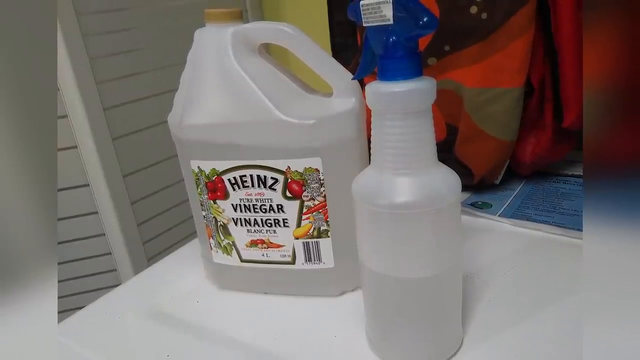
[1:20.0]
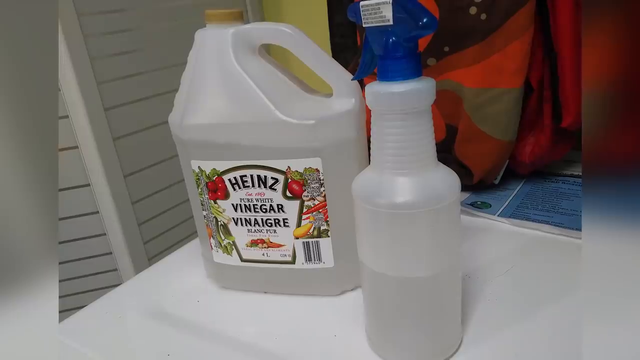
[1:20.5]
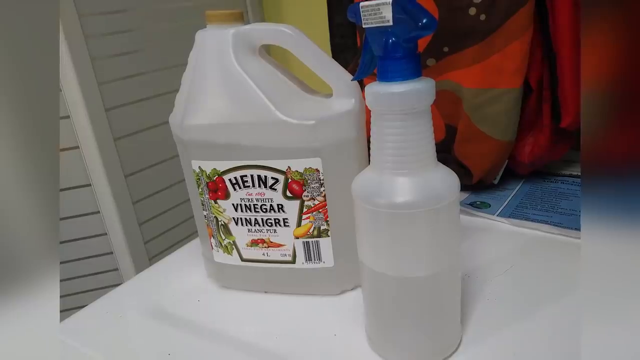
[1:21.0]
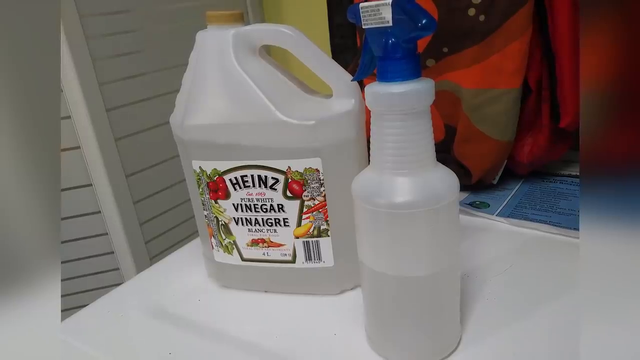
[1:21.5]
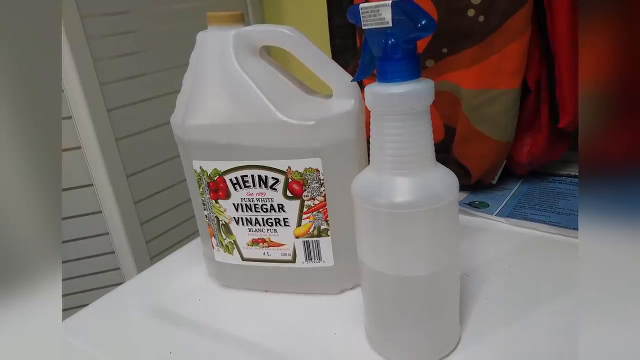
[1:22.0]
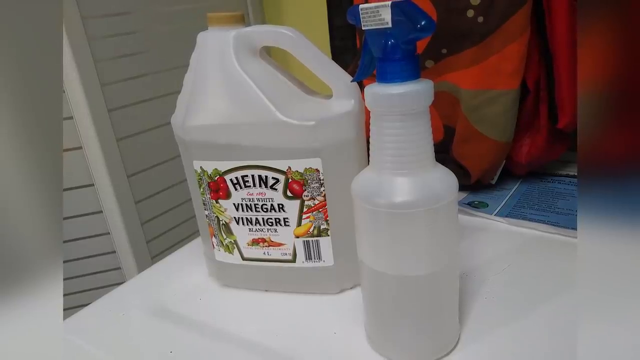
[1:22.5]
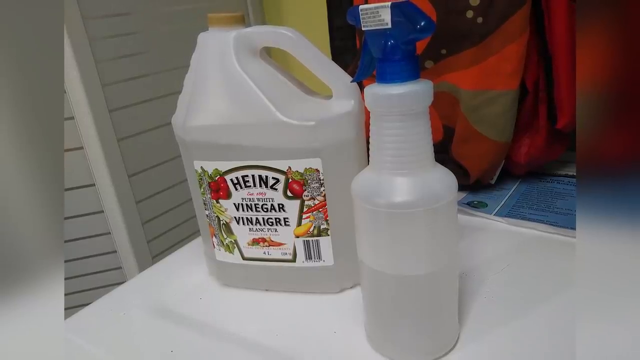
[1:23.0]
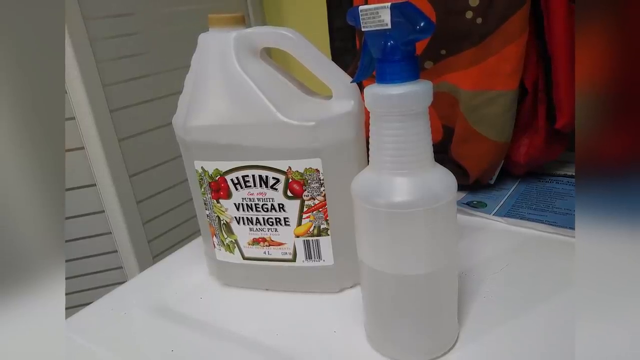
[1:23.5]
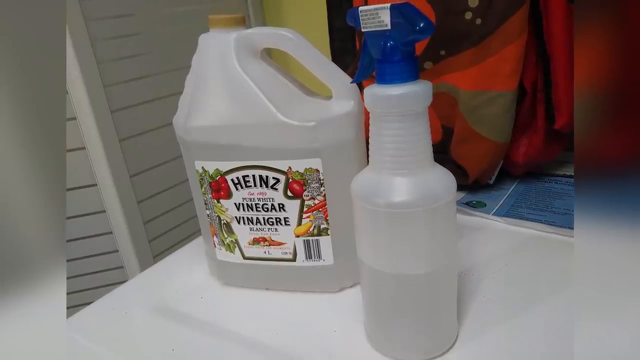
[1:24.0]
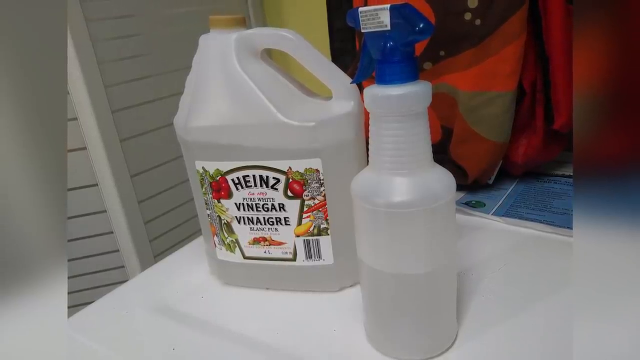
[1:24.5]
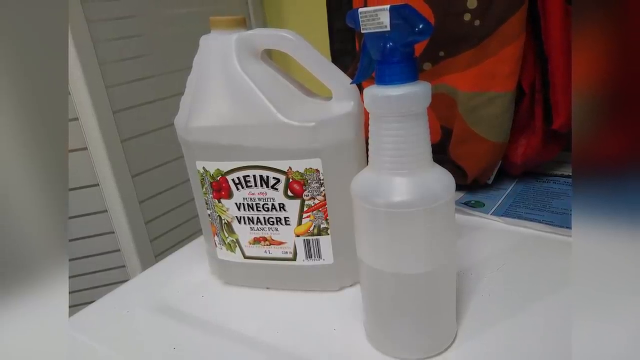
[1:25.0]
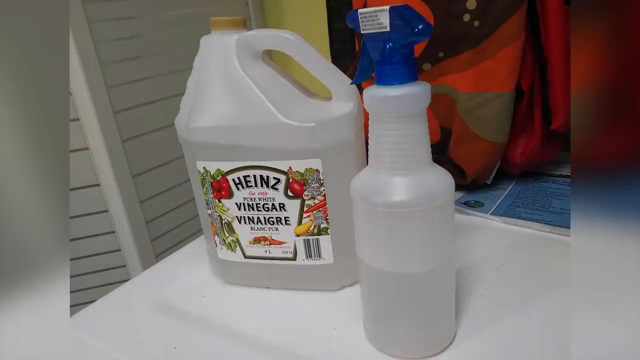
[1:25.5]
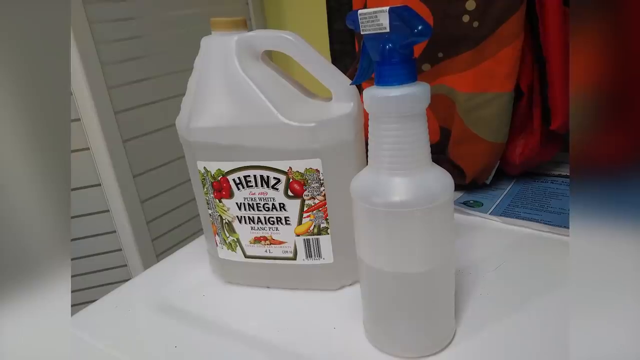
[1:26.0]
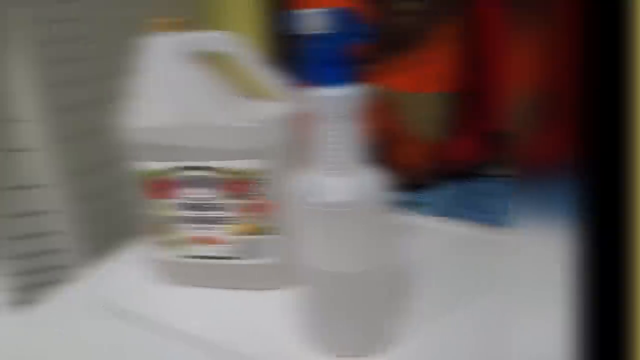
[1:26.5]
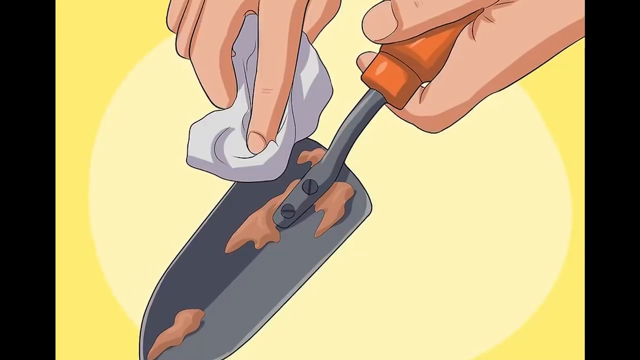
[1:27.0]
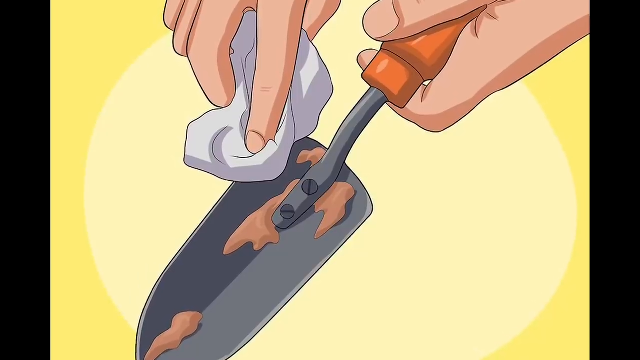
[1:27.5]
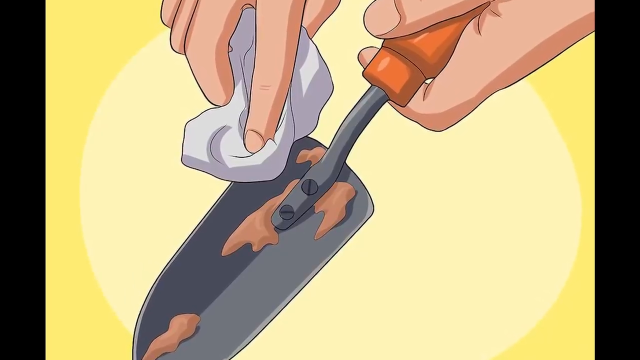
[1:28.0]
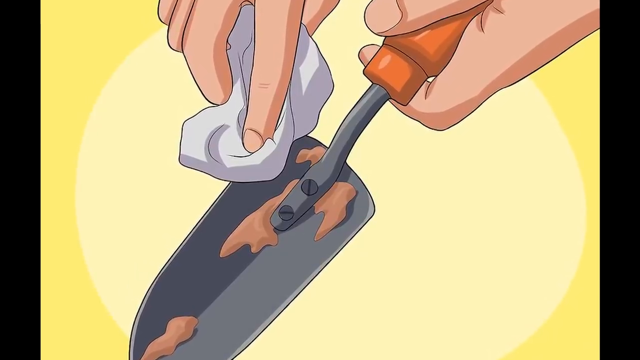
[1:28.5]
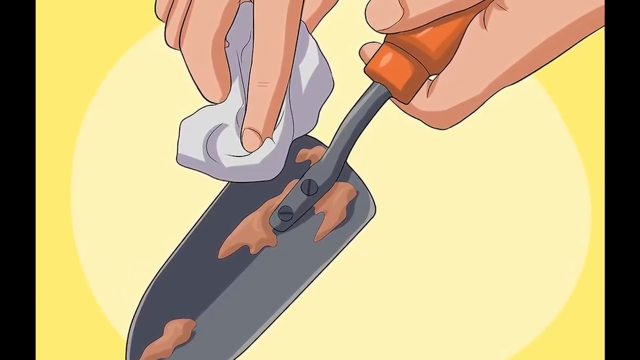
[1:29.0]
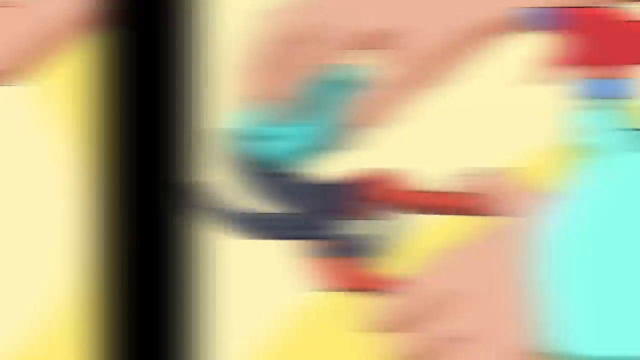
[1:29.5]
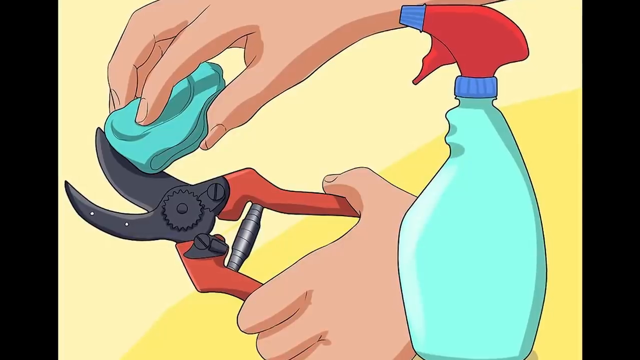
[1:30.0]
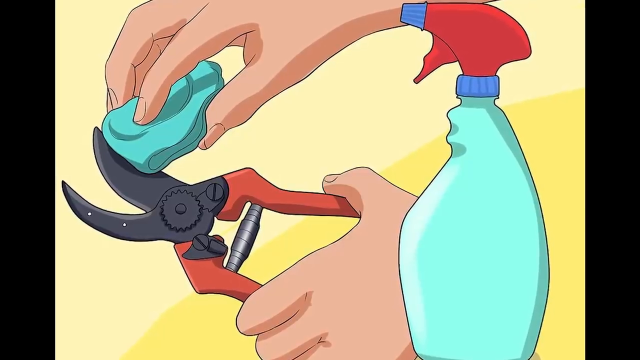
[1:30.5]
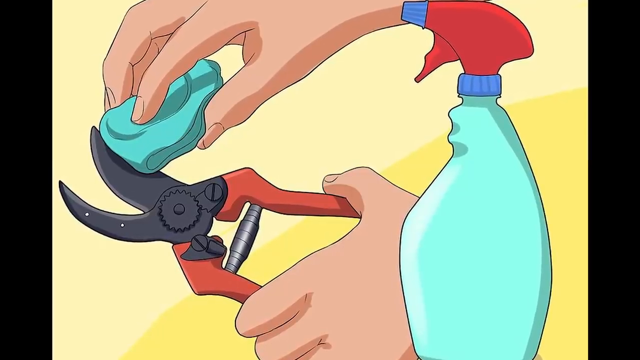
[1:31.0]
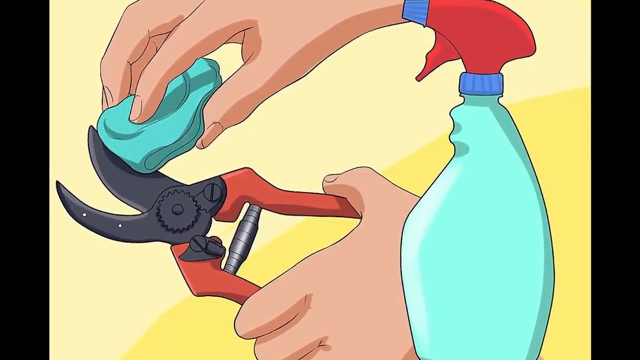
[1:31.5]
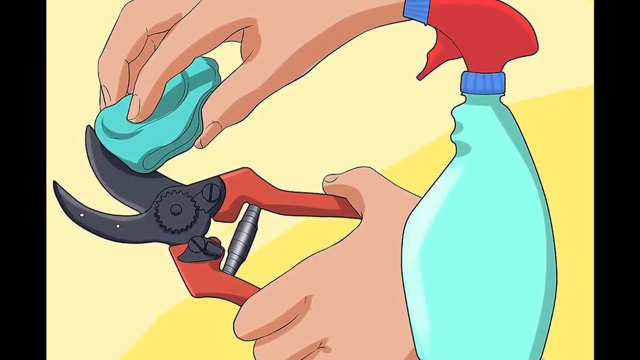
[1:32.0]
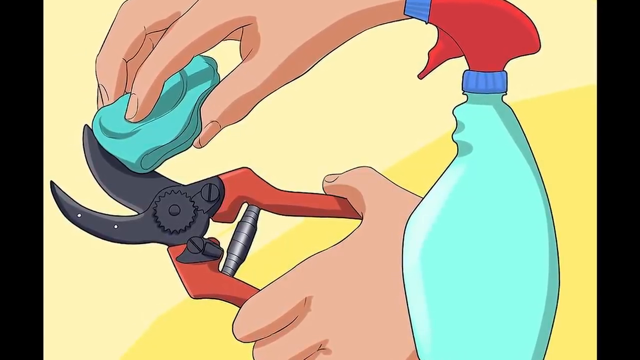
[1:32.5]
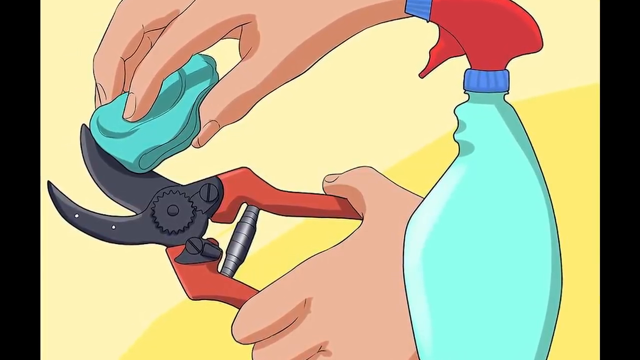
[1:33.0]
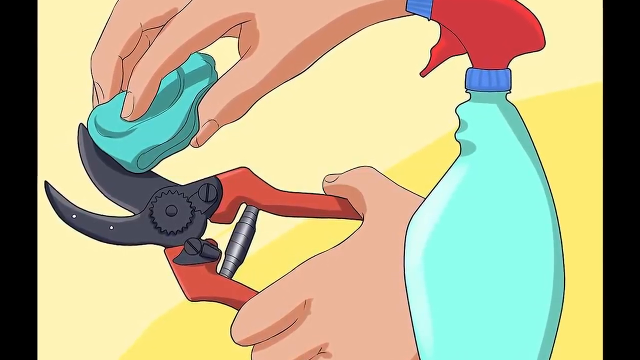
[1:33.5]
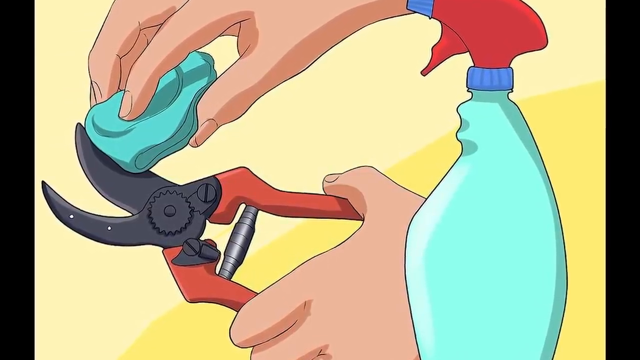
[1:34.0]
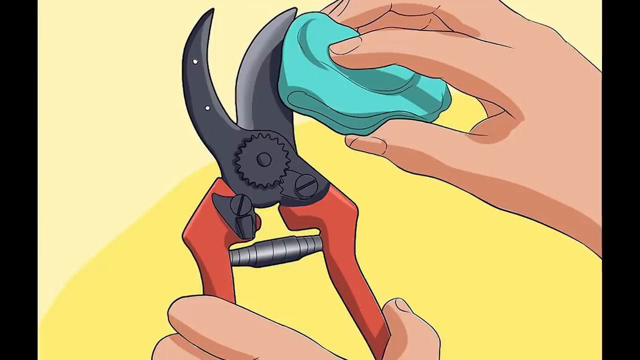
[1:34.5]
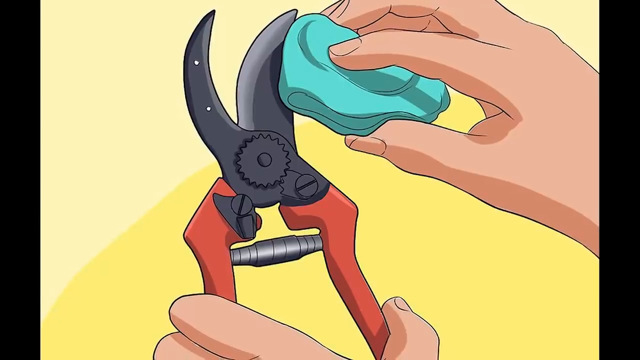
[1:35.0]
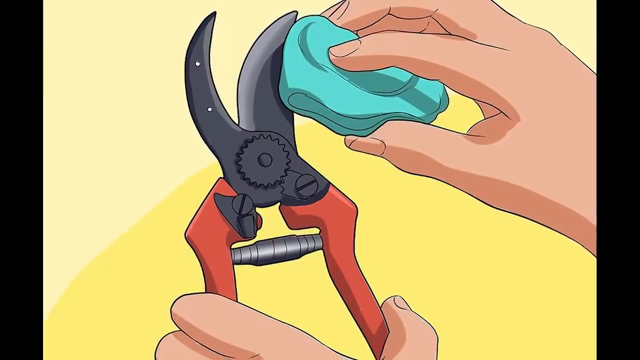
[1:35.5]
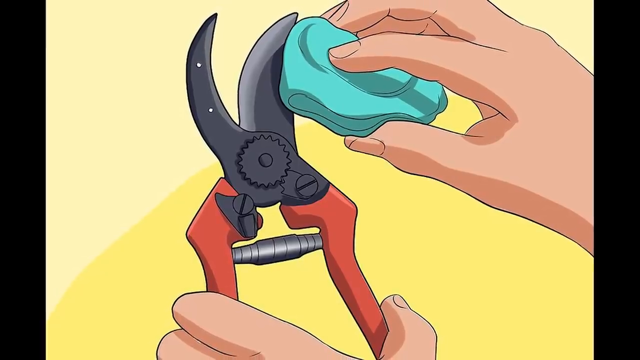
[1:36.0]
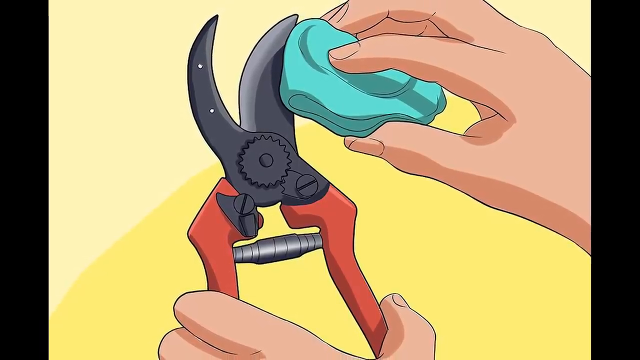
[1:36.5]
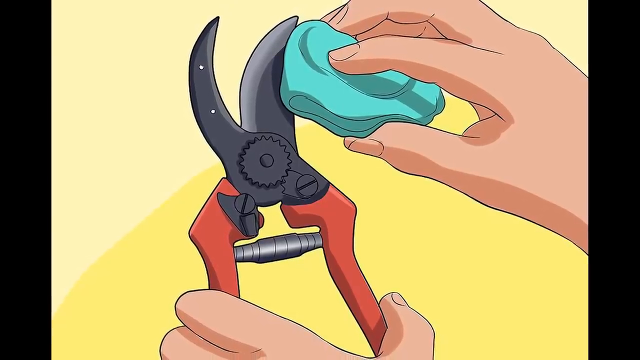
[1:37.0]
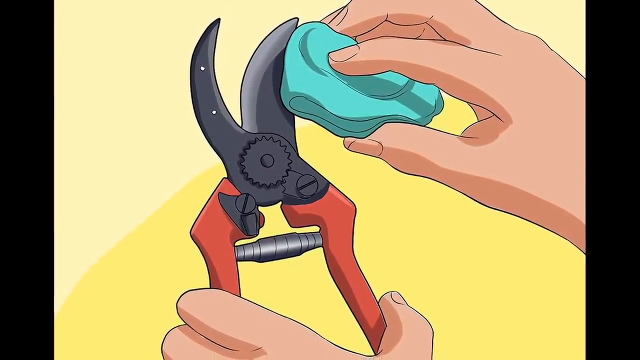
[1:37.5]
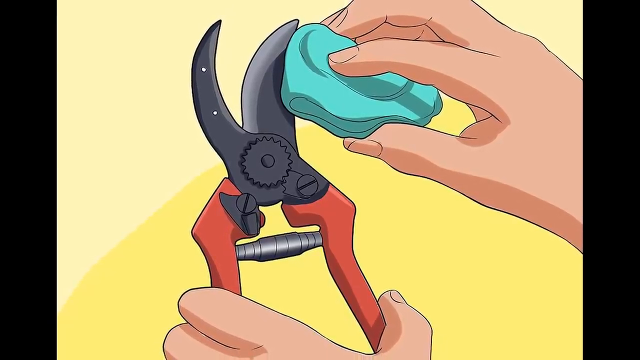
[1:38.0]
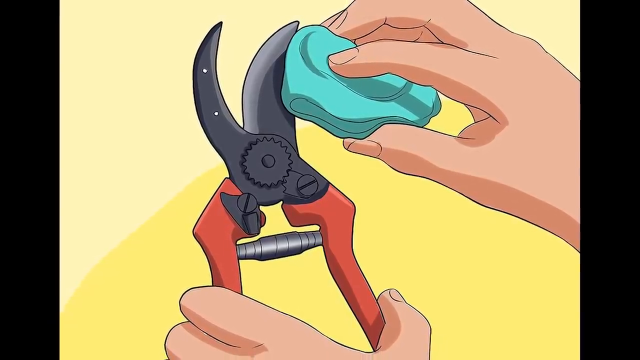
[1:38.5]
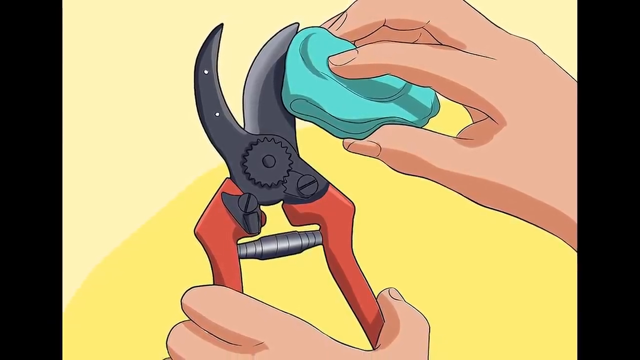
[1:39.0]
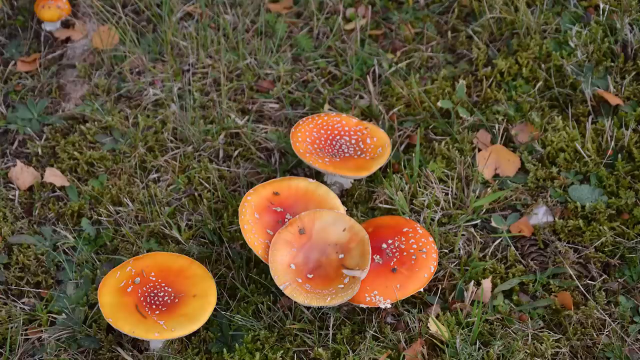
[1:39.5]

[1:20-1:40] The vinegar bottle and the spray bottle with the blue top are on top of the washing machine. The shot cuts to a realistically drawn cartoon image of someone's left and right hands against a yellow background: the left hand holds a gardening shovel with brown dirt on its head, and the right hand holds a white cloth, trying to clean the dirt off. The shot then cuts to another realistically drawn image of two hands, the left holding a gardening snipping tool and the right holding a blue cloth used to clean it. To the right is a blue spray bottle with a red top. Another shot follows of the snipping tool being cleaned with the blue cloth.